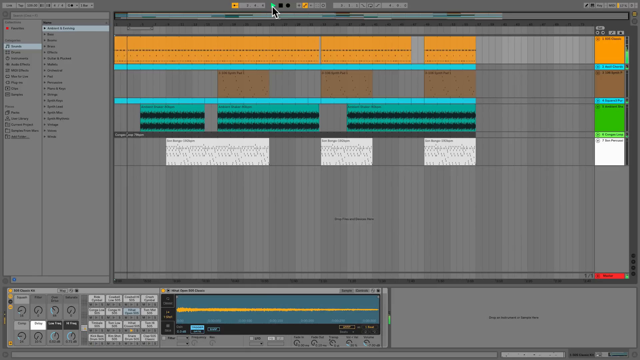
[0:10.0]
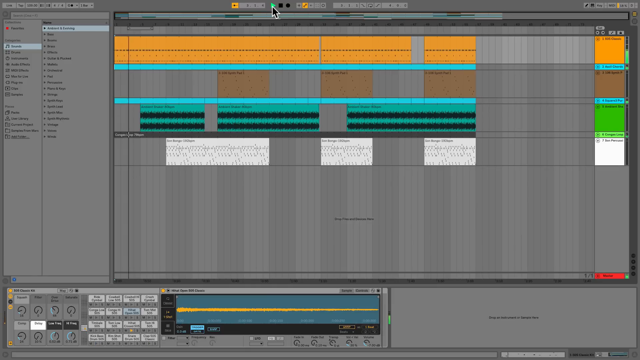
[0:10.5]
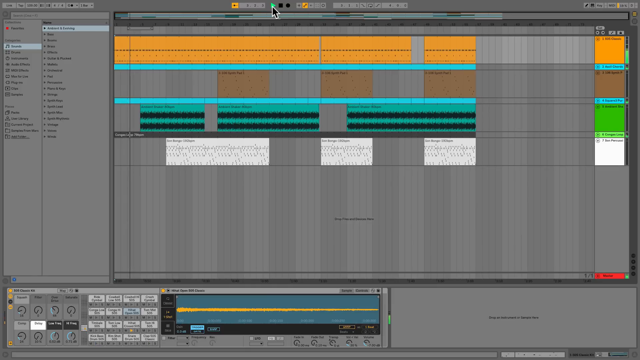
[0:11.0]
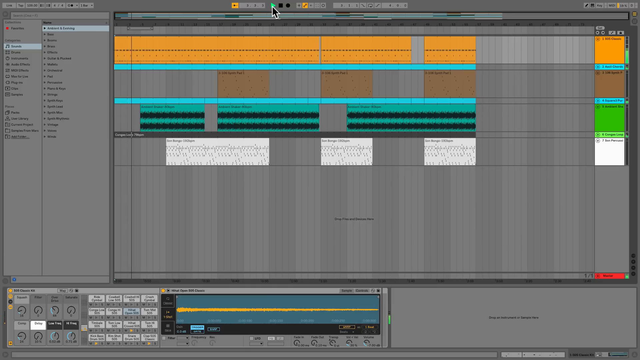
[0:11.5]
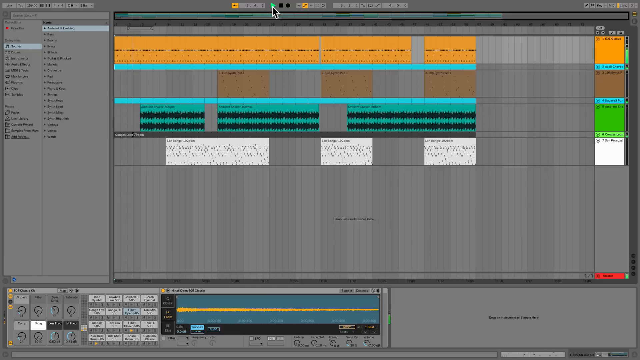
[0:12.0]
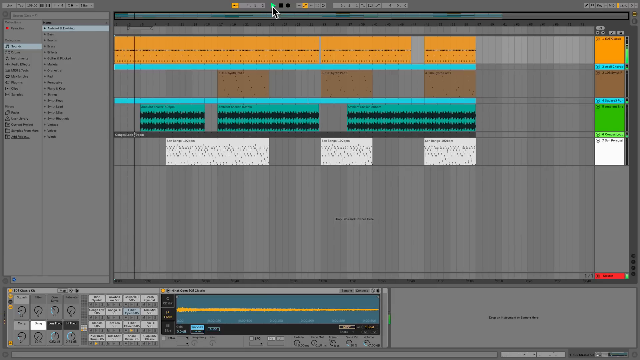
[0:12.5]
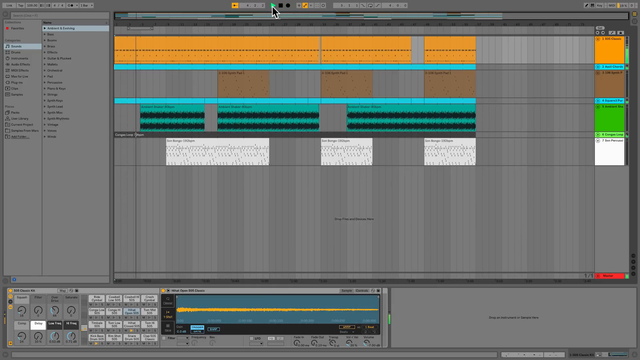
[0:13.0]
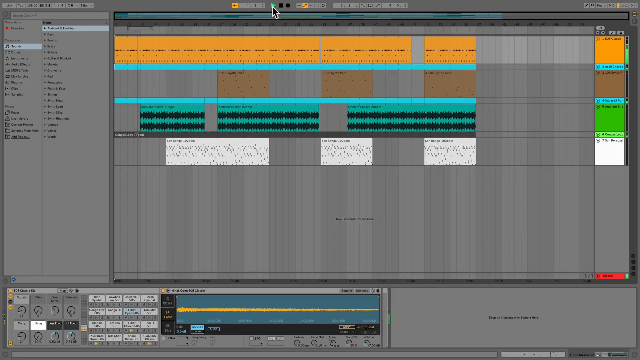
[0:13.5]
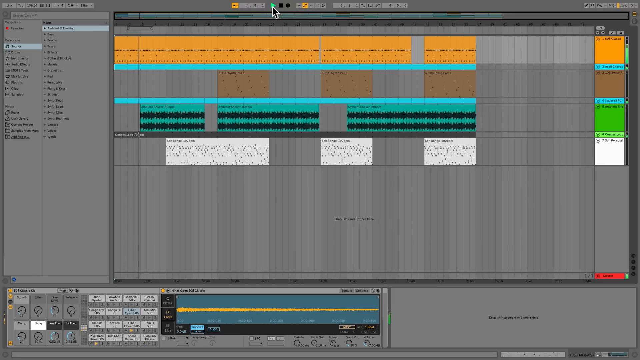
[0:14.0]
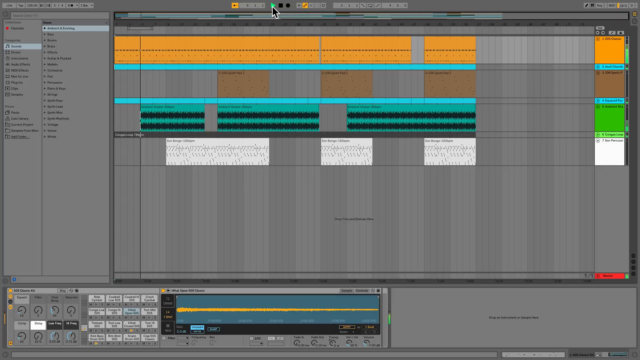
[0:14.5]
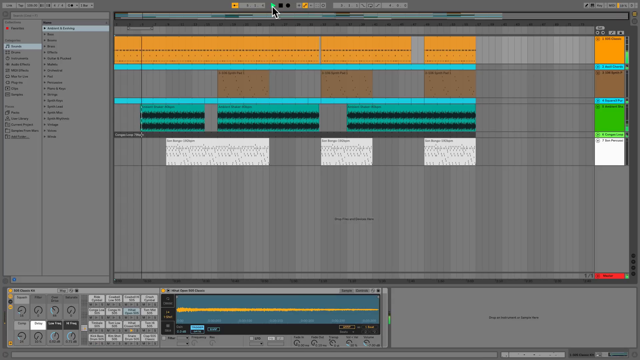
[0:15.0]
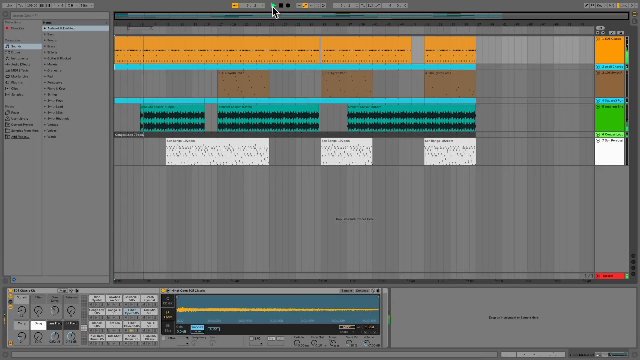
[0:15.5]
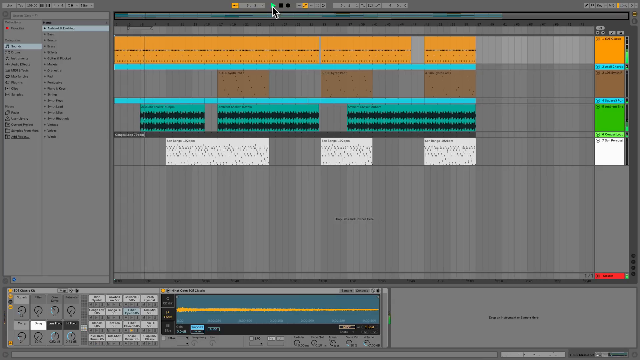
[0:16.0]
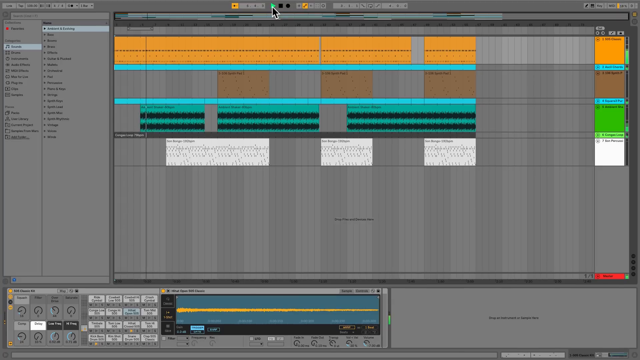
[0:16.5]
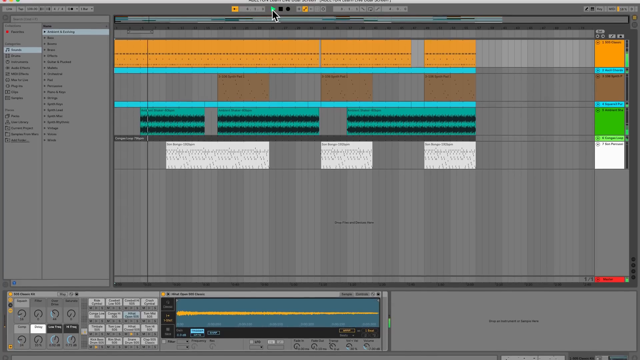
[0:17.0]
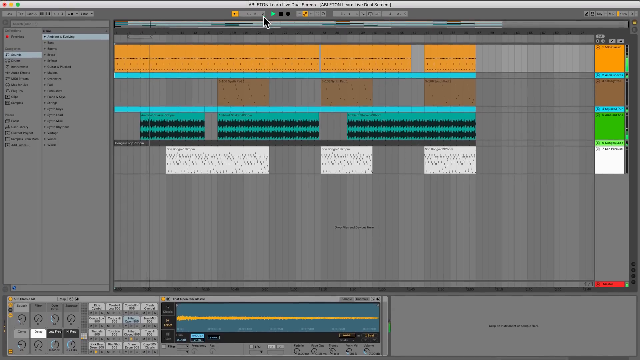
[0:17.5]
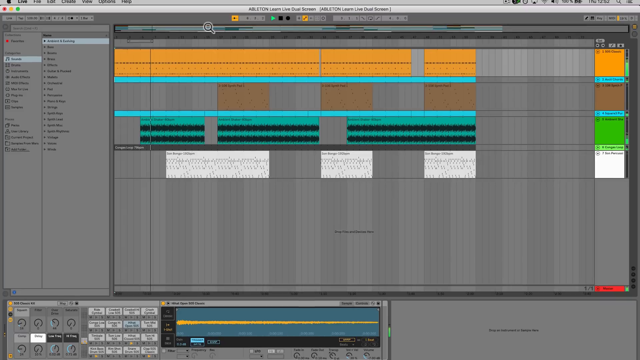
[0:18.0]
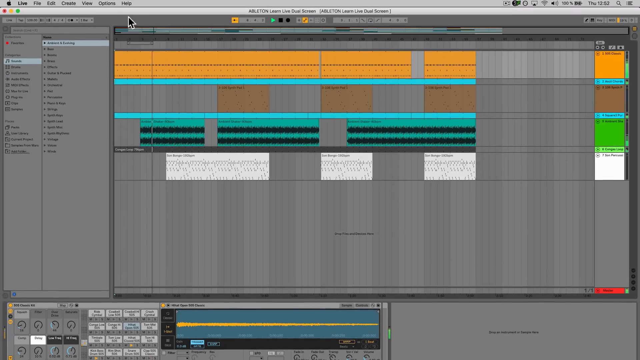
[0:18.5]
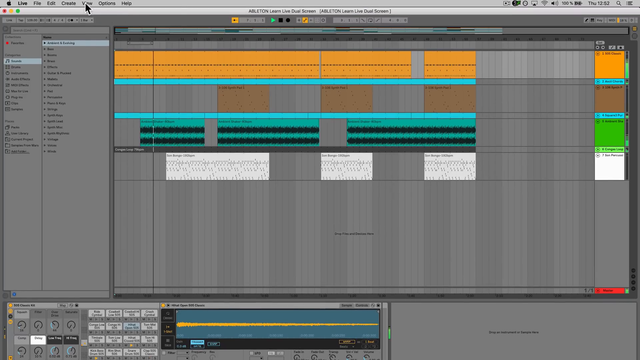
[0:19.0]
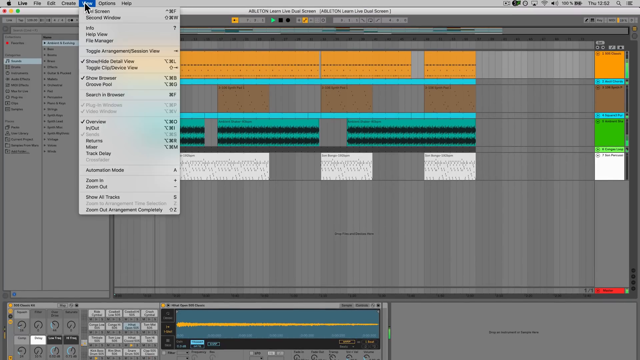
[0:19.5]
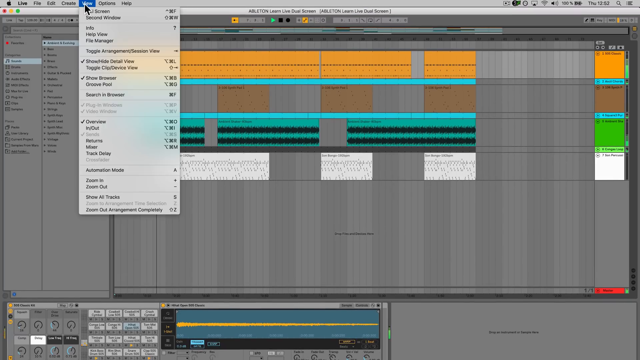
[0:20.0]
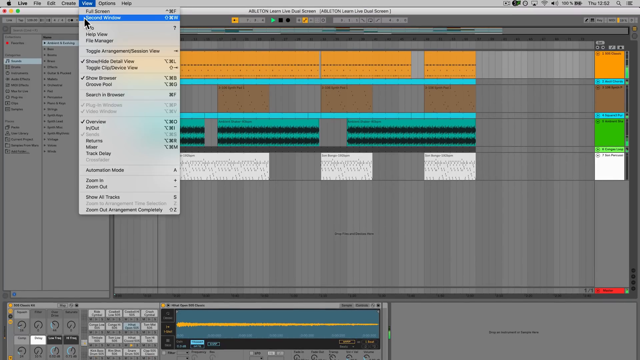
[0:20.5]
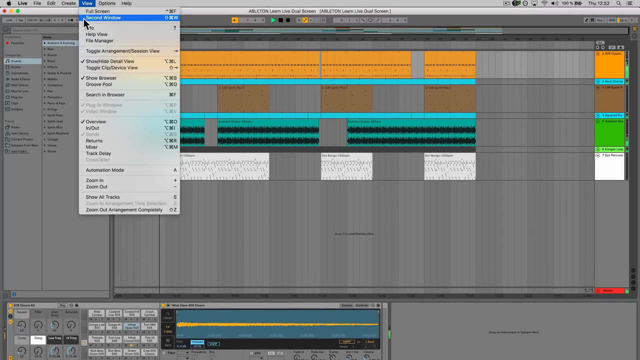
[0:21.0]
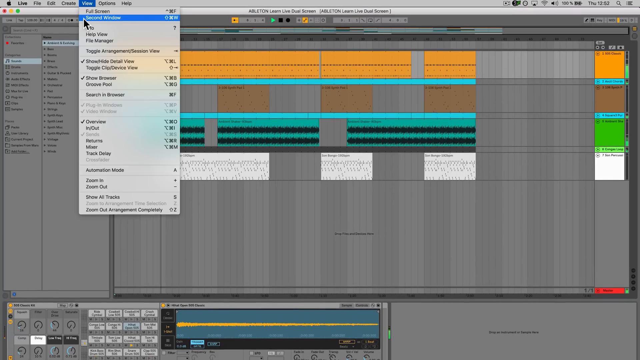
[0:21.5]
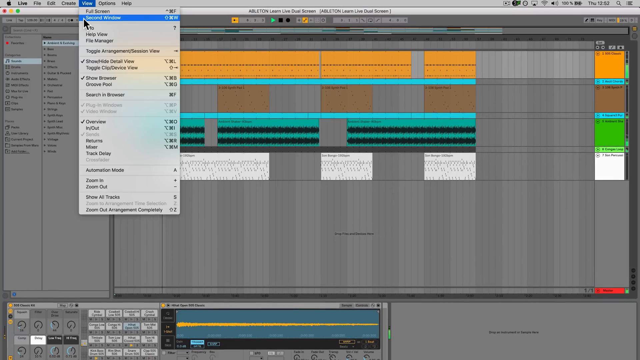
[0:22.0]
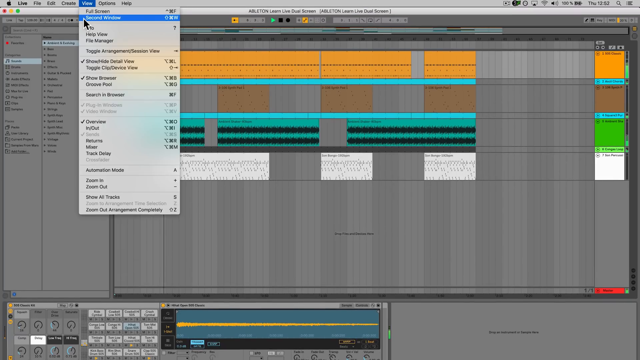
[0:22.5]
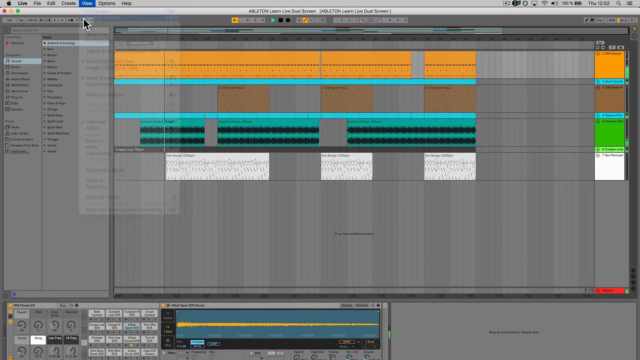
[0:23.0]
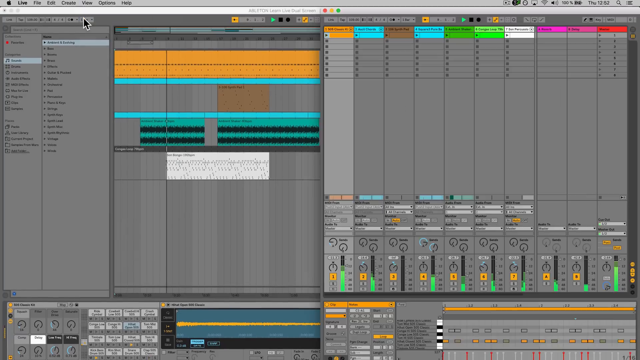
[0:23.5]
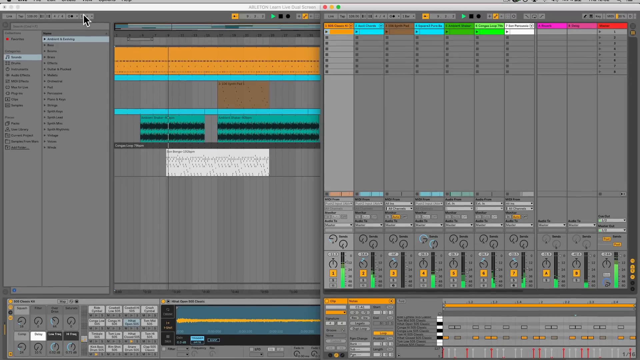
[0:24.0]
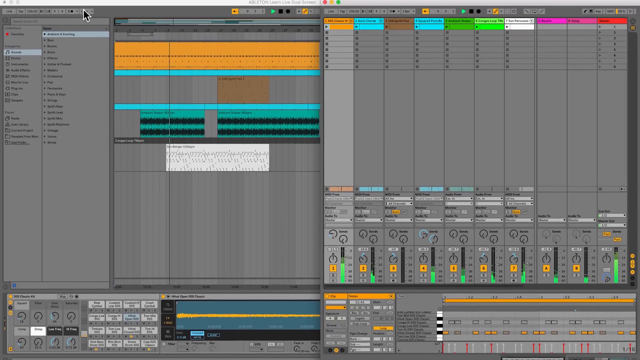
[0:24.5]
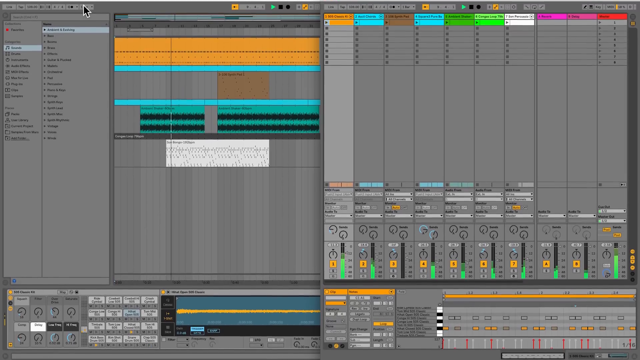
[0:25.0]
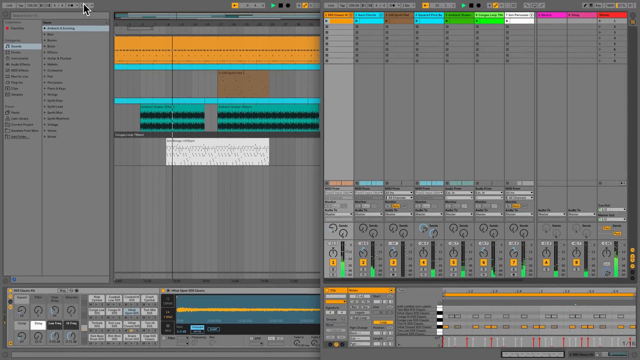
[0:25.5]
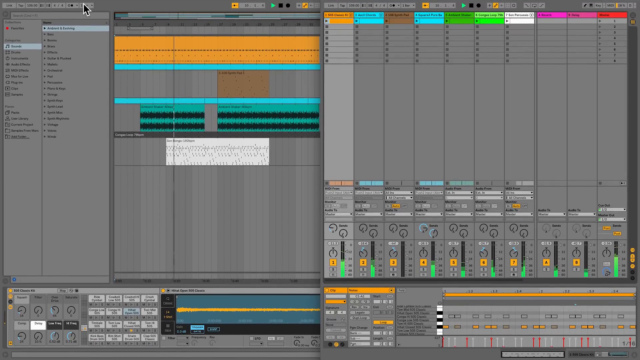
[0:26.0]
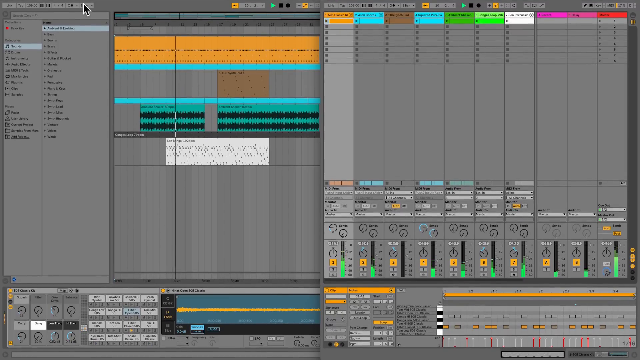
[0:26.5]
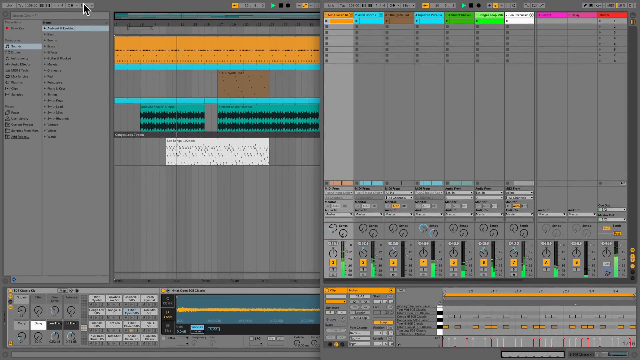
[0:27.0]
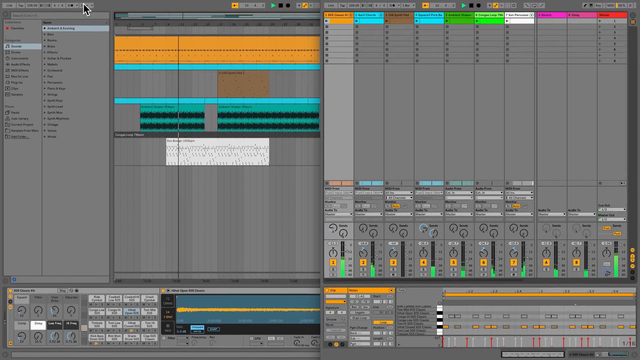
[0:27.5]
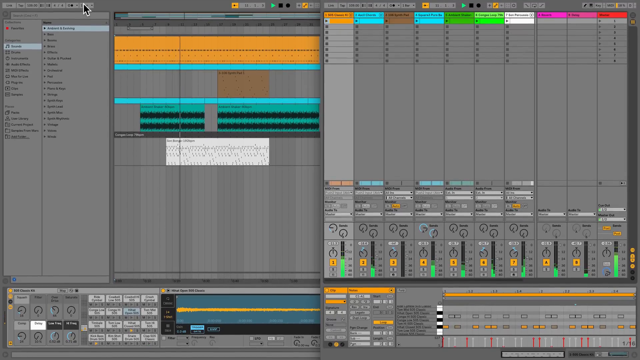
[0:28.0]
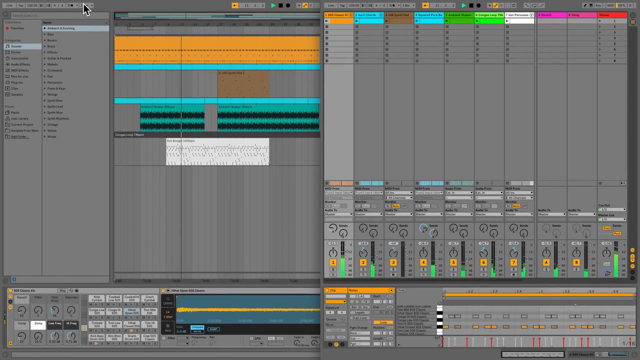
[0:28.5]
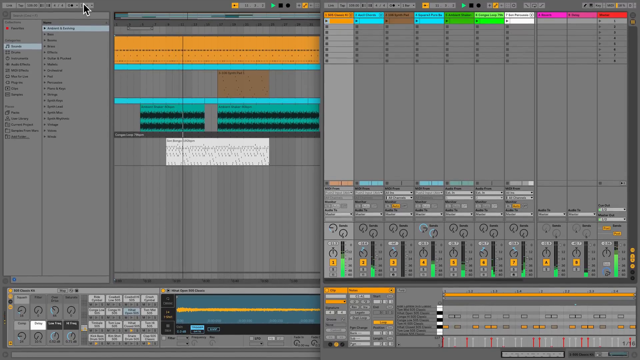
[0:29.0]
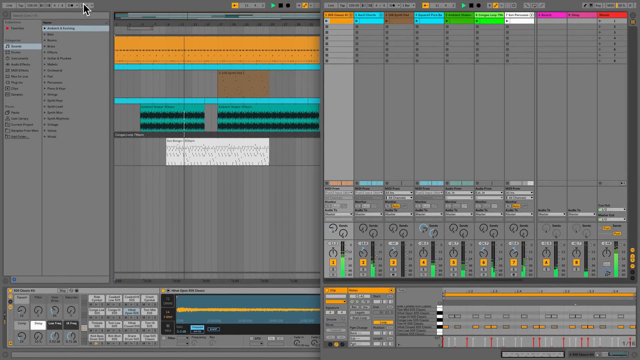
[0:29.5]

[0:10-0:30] The view appears to be a shot of a computer screen. On the left are two columns with lots of words and categories to click on. Across the top of another area runs an orange bar, with a thinner, skinny baby blue bar underneath it. Below that is a grayed-out bar with small segments alternating gray and white, then a larger, lighter orange box, then more gray and white alternating with a light orange box. Next comes another thin baby blue bar, then a green bar with two black squiggle lines running through its center, and below that a white bar with black squiggle lines running through it. The screen is darkened below. Further down is a big, thicker blue box with a yellow line running through its center; the yellow line looks kind of static-y. There are lots of little buttons with words written in them. The arrow on the screen clicks on buttons, drop-down menus appear, and volume level measurements go up and down.